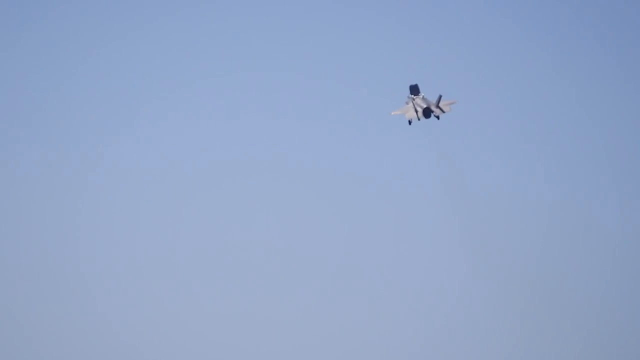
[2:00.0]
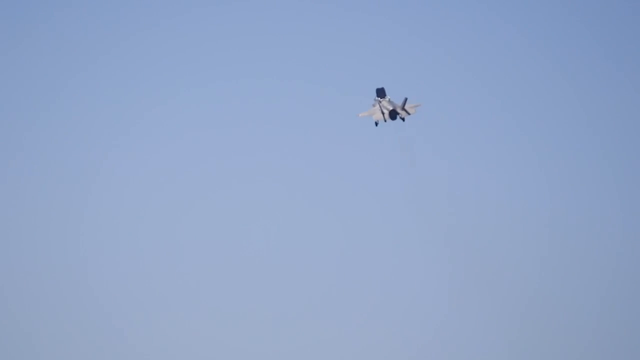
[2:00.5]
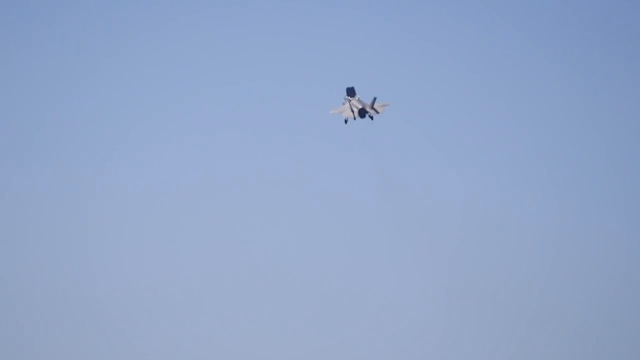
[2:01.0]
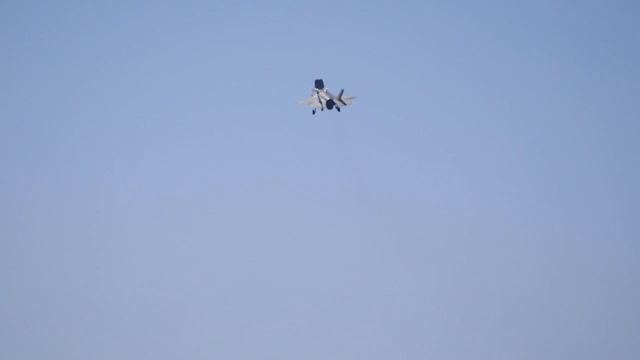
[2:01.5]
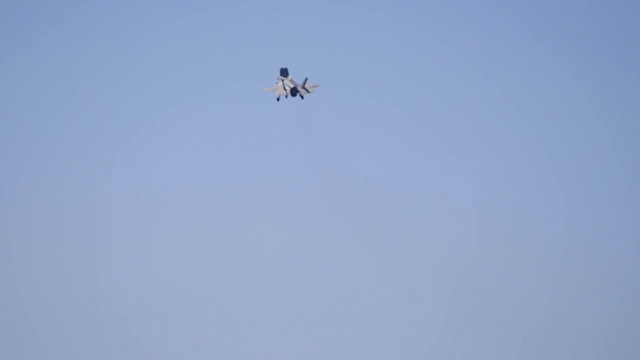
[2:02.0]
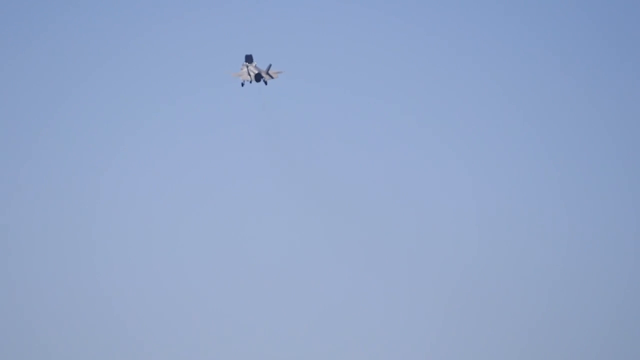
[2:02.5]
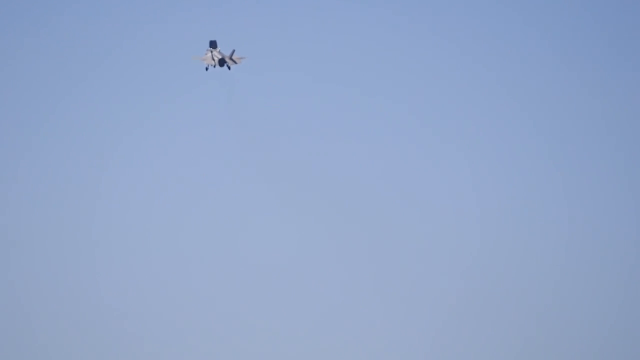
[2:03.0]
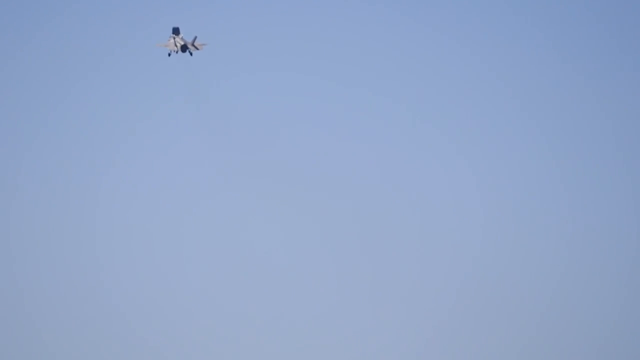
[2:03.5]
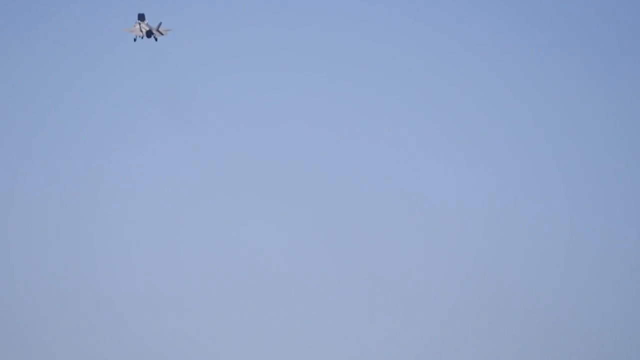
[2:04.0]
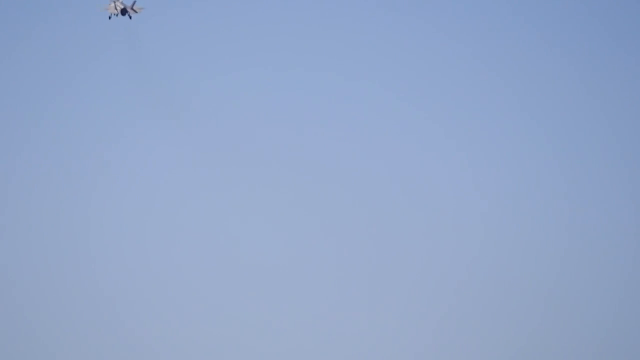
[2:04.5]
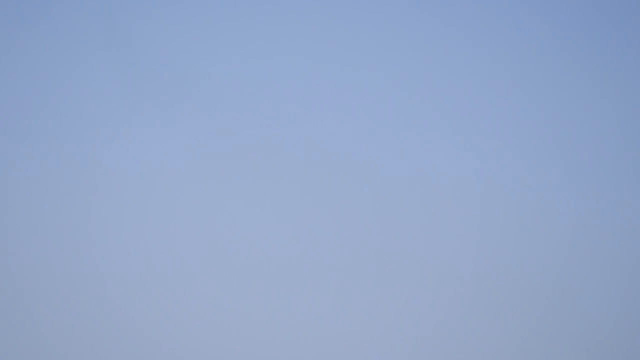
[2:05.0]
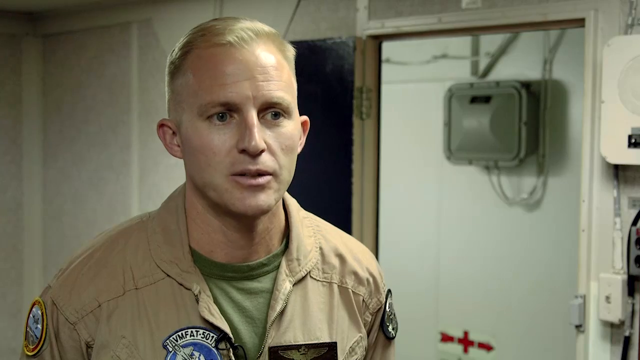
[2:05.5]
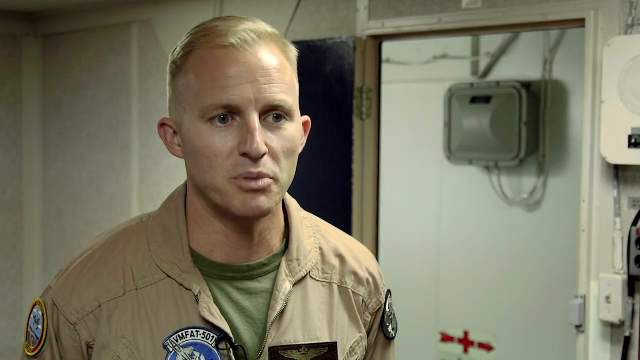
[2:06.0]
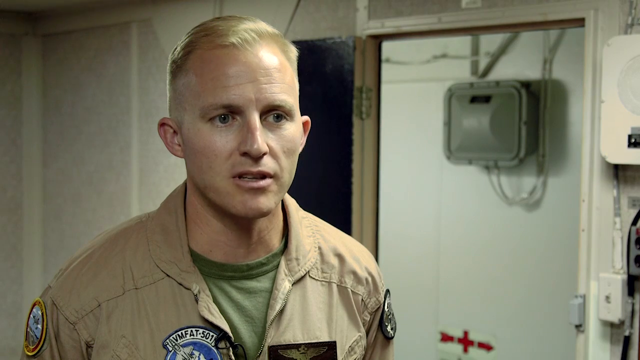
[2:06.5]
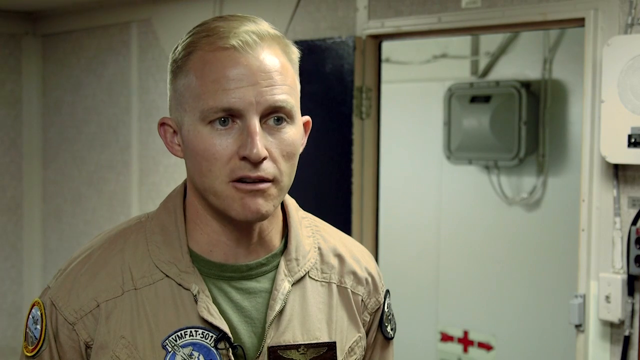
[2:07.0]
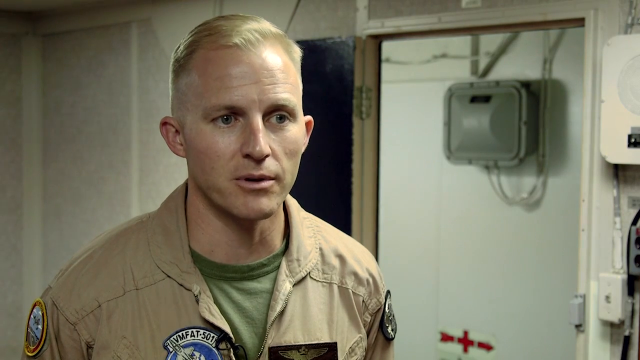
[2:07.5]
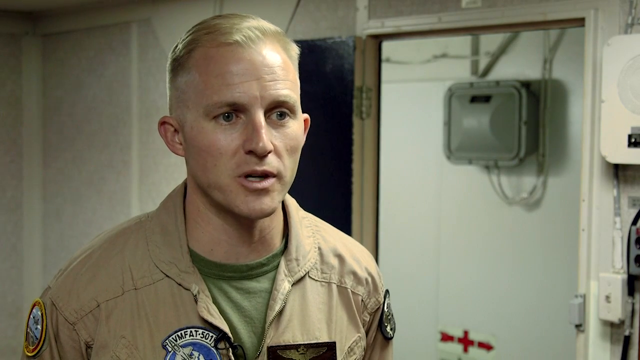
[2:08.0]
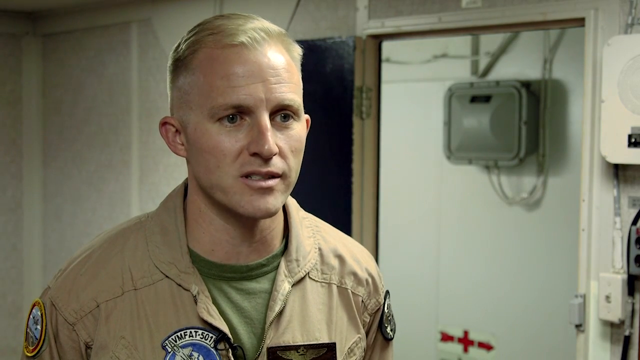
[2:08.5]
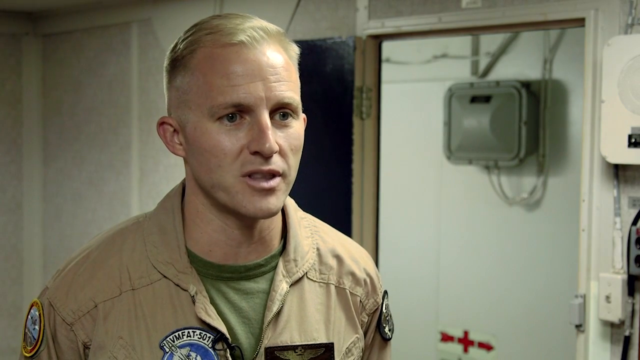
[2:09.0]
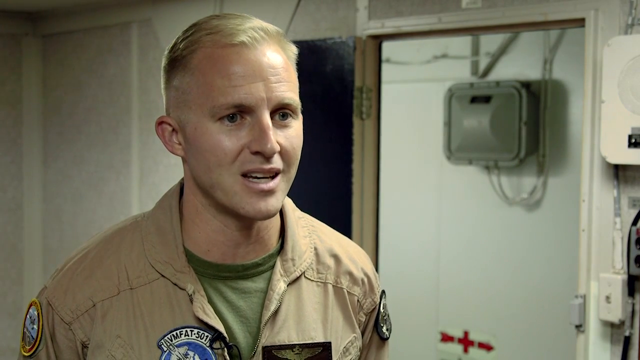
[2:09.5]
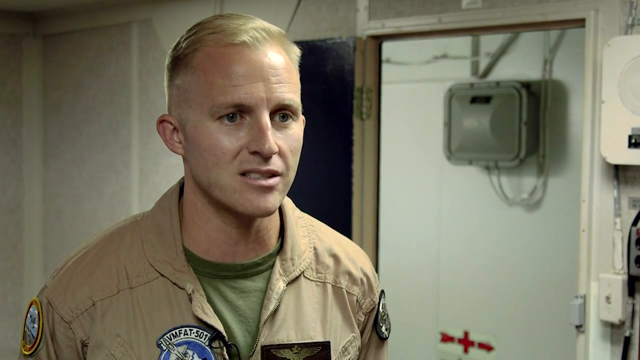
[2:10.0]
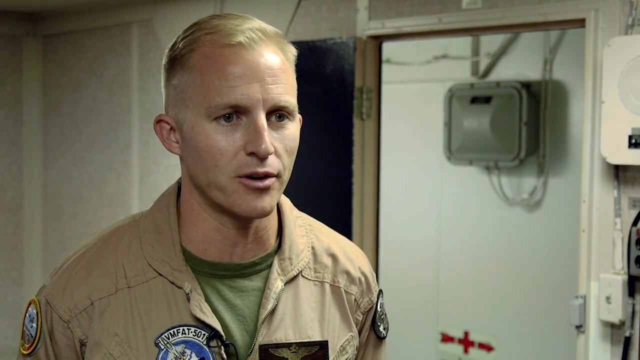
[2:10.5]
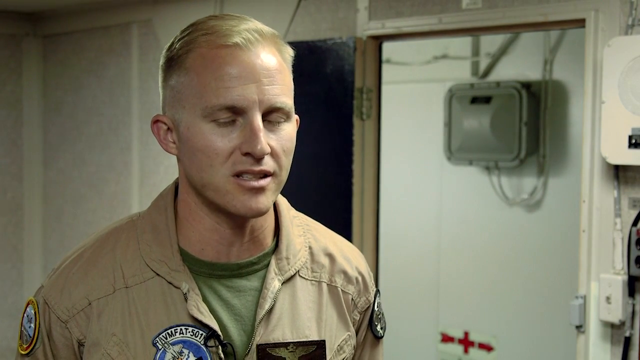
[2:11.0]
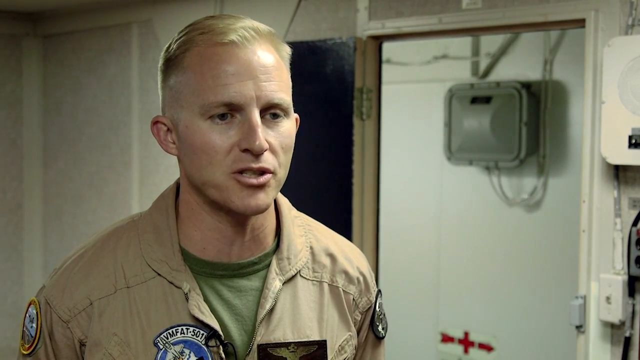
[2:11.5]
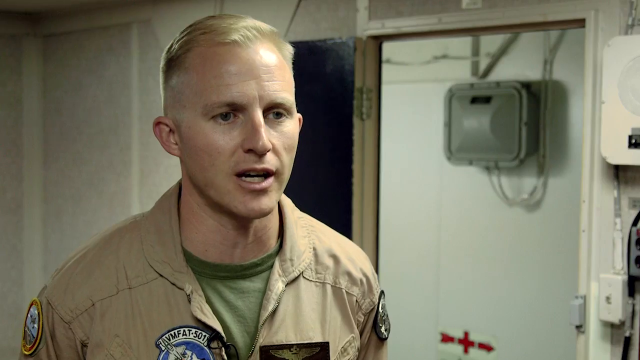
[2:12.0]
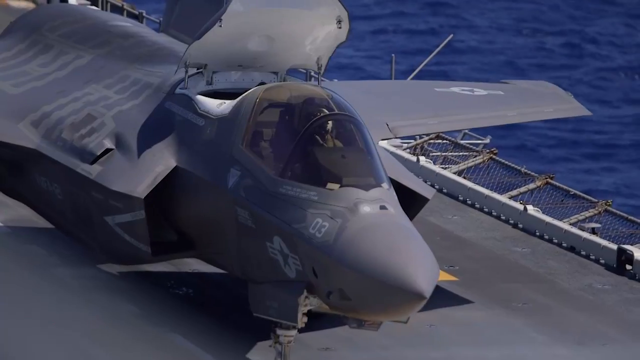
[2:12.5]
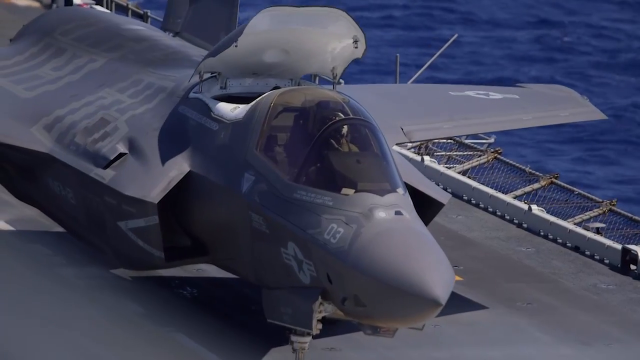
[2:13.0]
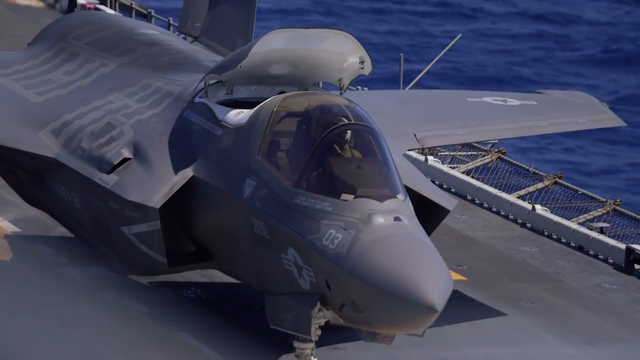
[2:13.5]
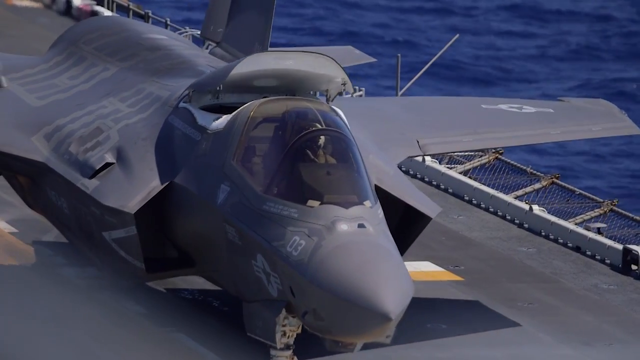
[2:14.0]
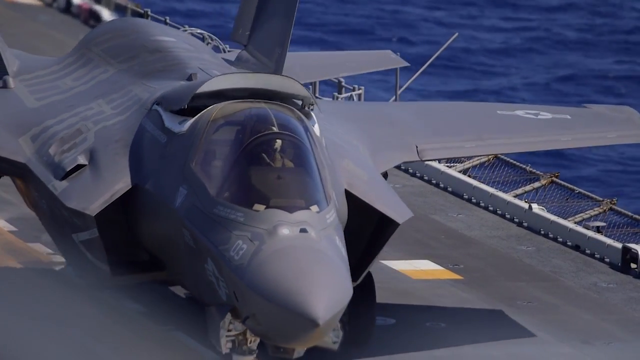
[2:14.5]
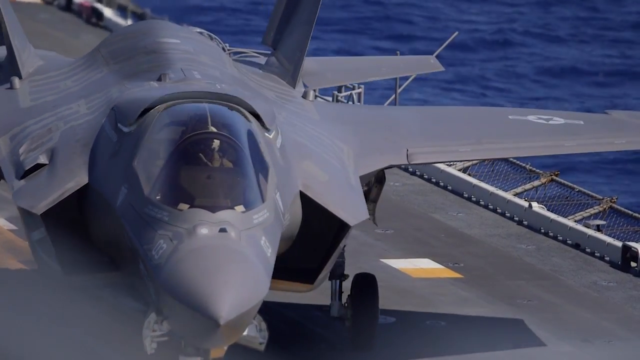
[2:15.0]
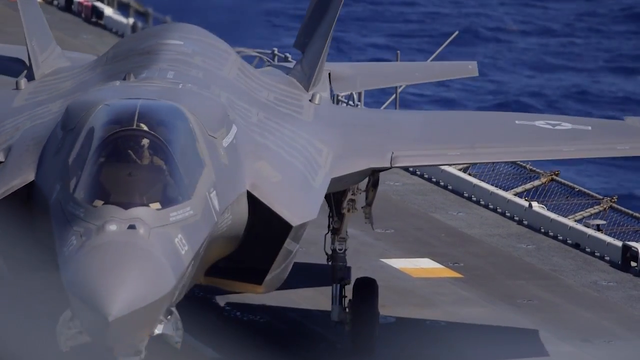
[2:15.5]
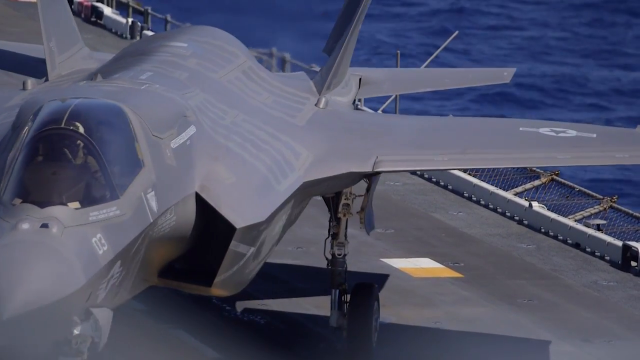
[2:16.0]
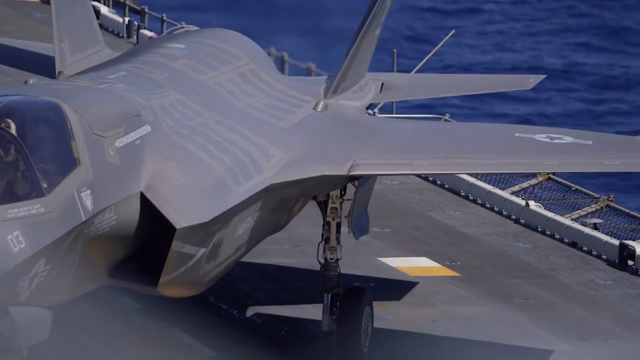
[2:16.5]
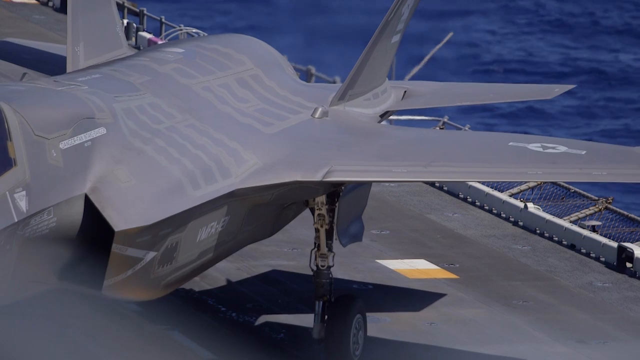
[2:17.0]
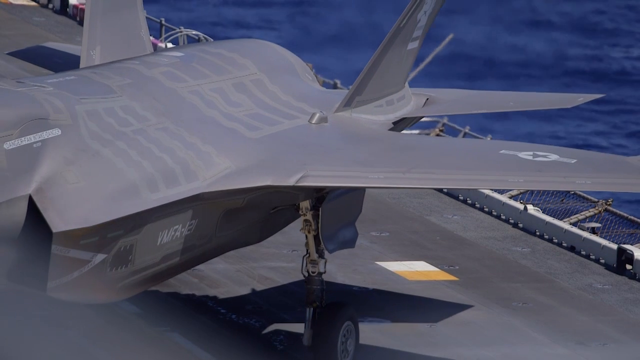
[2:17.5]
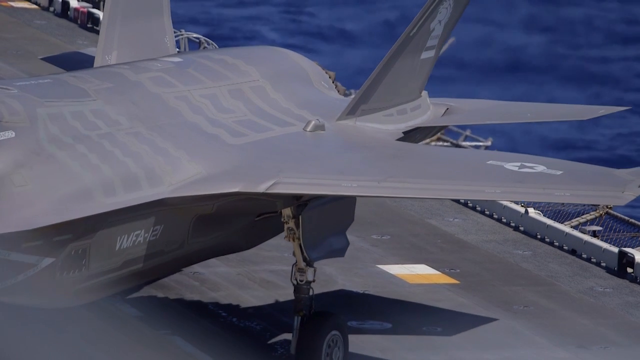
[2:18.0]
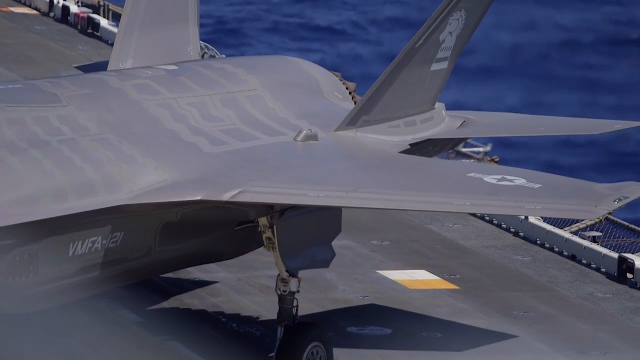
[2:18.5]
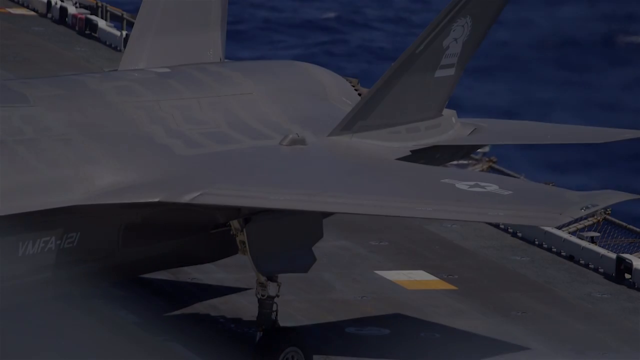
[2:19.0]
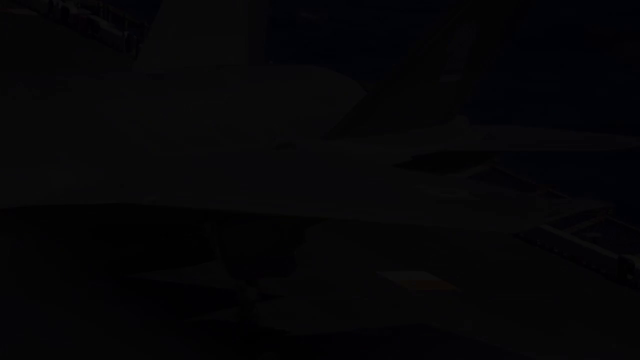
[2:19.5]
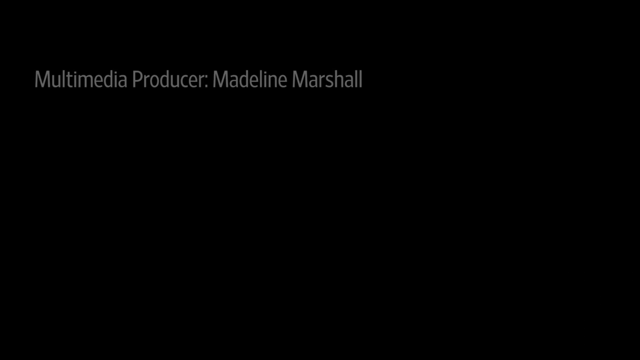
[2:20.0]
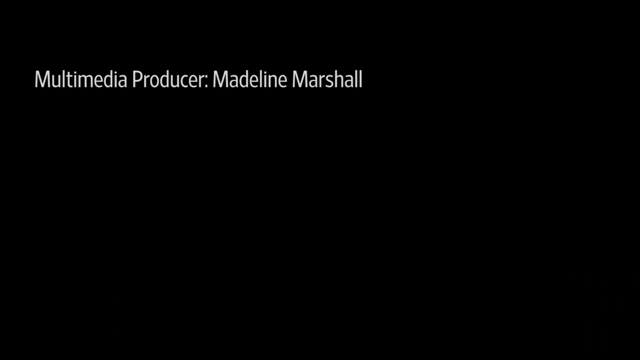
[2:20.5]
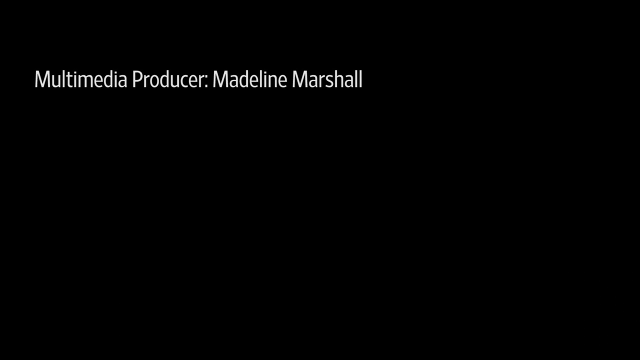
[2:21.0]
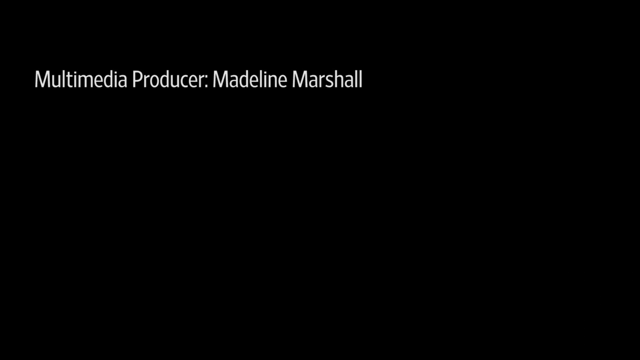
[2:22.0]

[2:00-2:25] A jet flying in the sky in the upper right area moves off toward the upper left corner until it is gone. The pilot appears again, speaking, wearing a tan uniform with a light green shirt underneath. The scene changes to the front part of a jet viewed from up above, almost an aerial view. The jet shifts to the left, and the pilot is visible in the cockpit, with ocean water in the background to the right corner. The jet is on the edge of the carrier. It rotates to the left, its nose pointing directly off the screen to the left, and the rear part of the jet becomes visible as it fully turns. The screen turns black, and white words appear at the top: "multimedia producer Madeline Marshall".